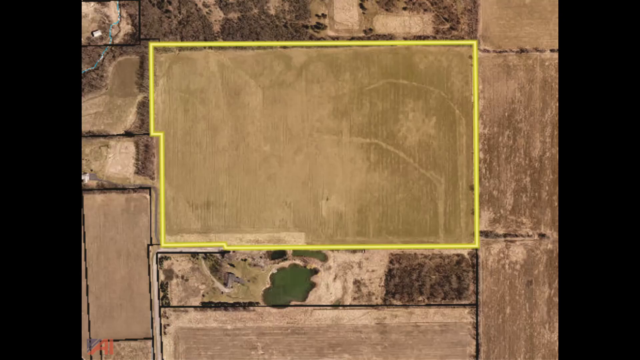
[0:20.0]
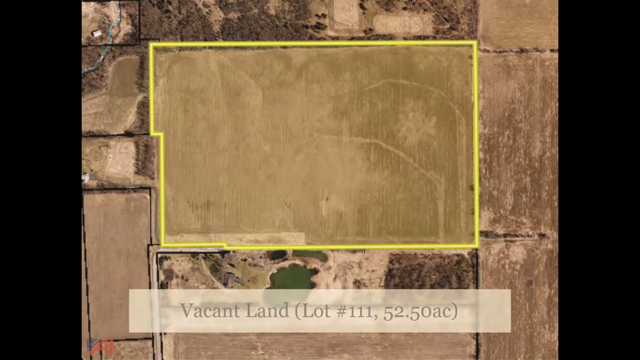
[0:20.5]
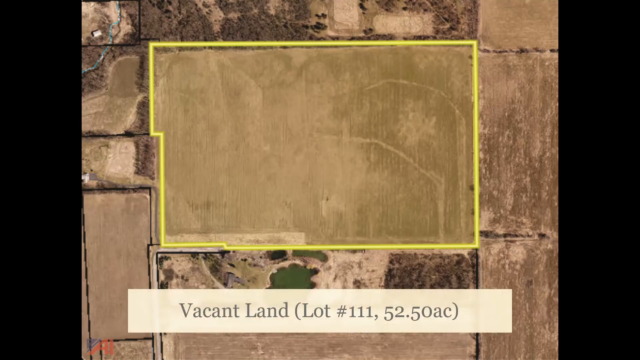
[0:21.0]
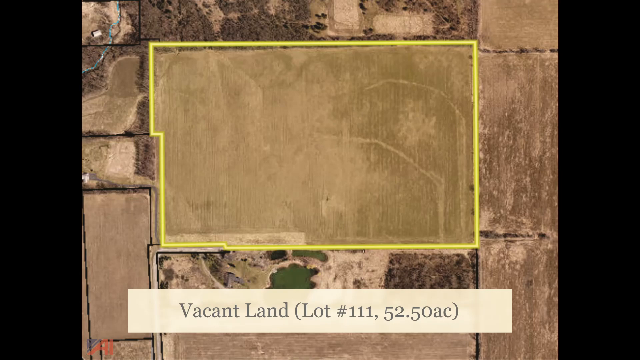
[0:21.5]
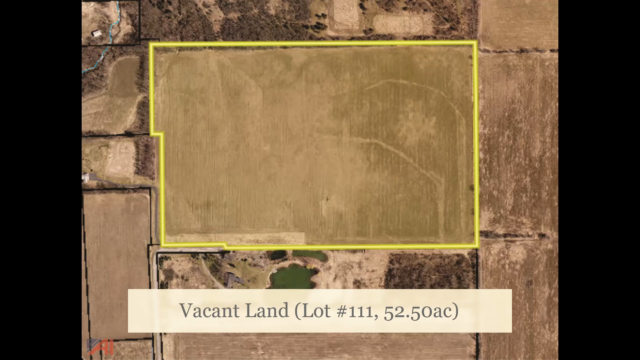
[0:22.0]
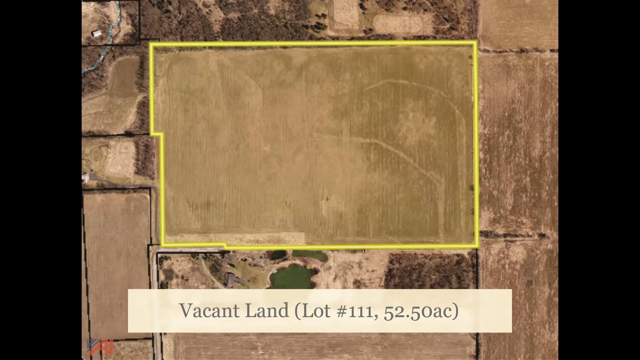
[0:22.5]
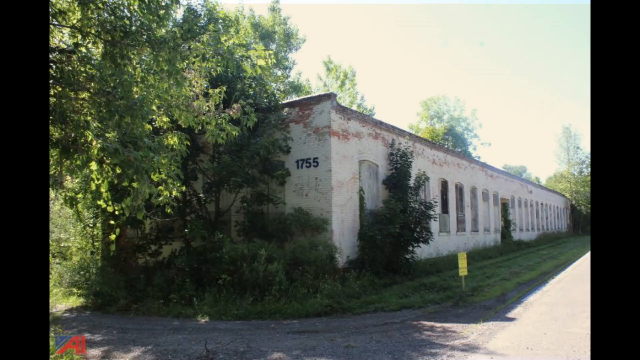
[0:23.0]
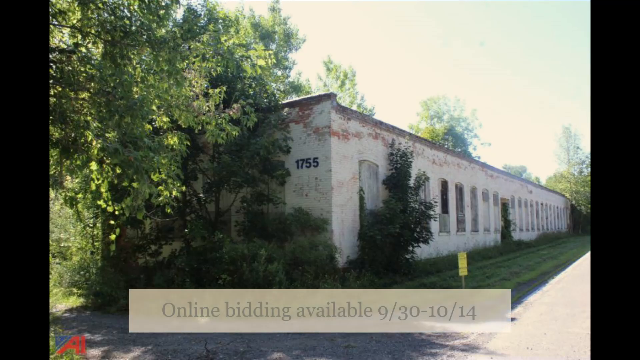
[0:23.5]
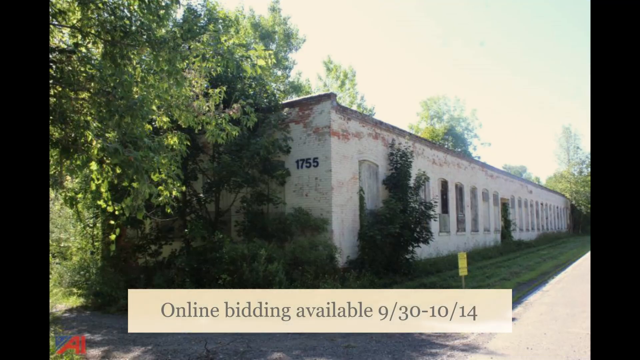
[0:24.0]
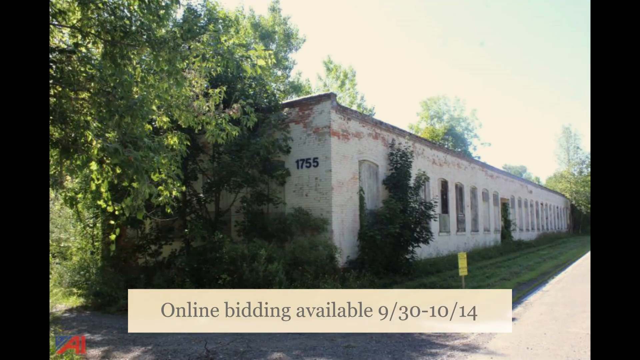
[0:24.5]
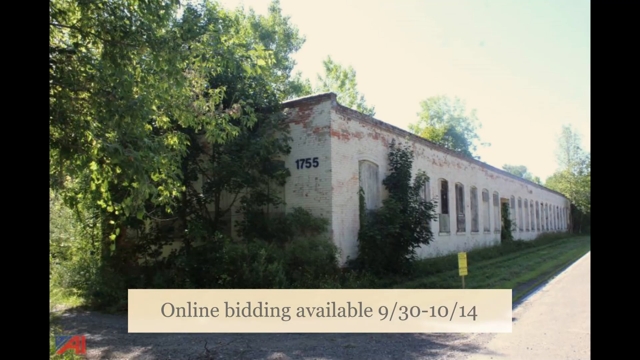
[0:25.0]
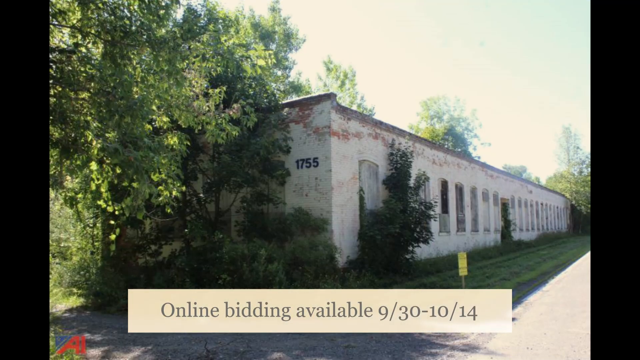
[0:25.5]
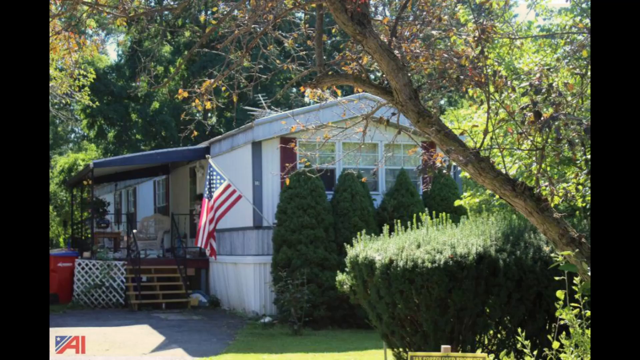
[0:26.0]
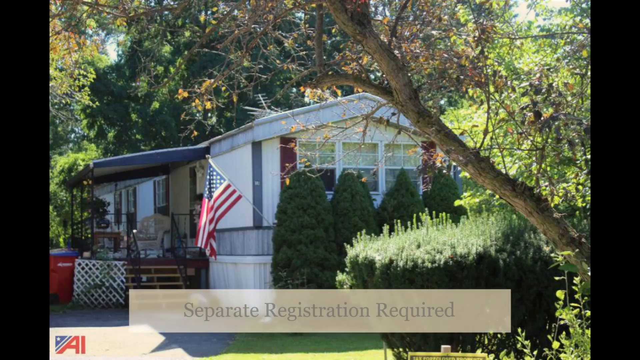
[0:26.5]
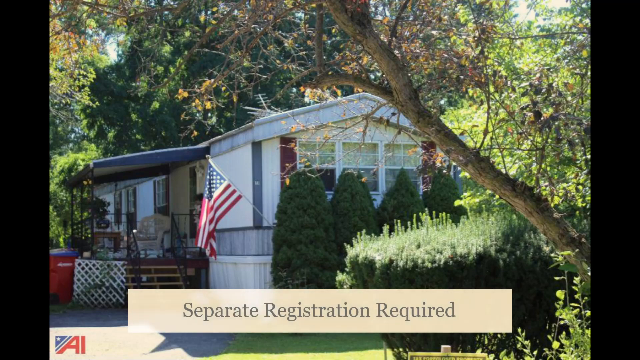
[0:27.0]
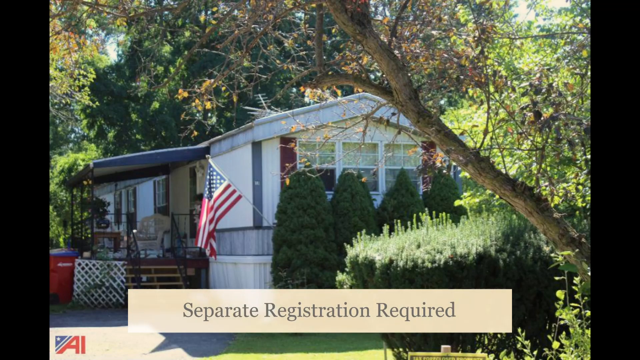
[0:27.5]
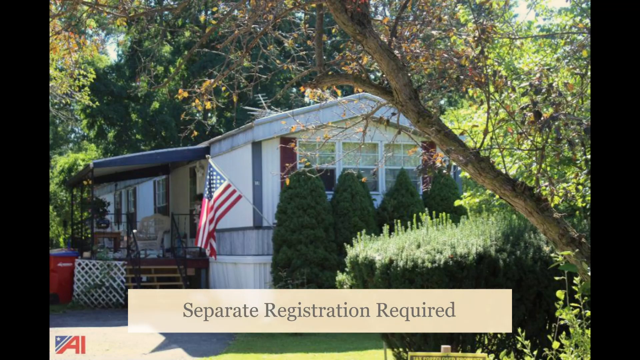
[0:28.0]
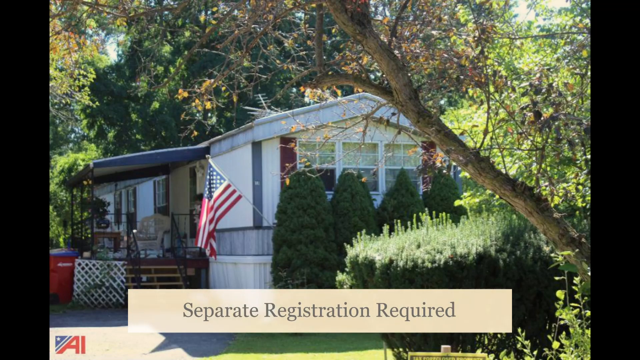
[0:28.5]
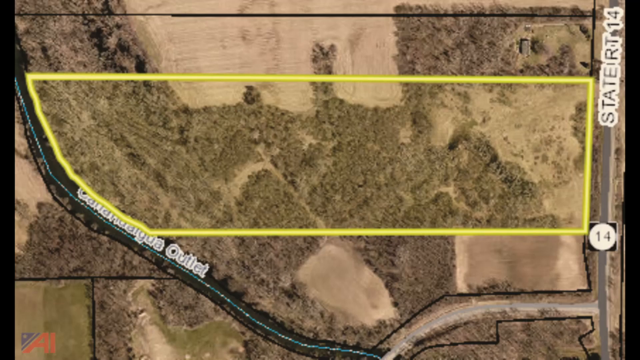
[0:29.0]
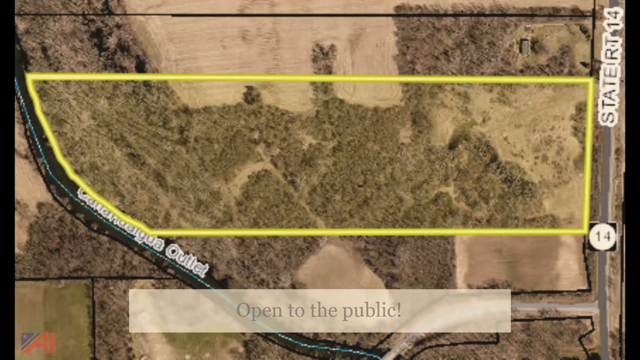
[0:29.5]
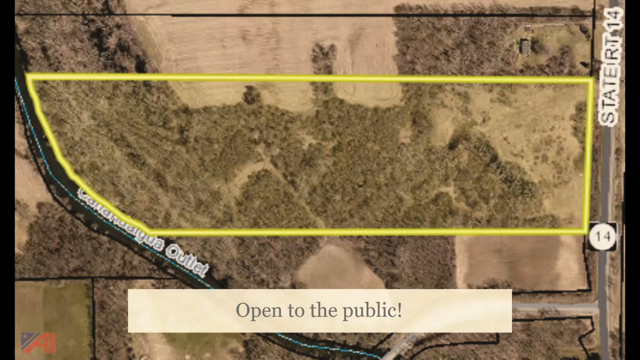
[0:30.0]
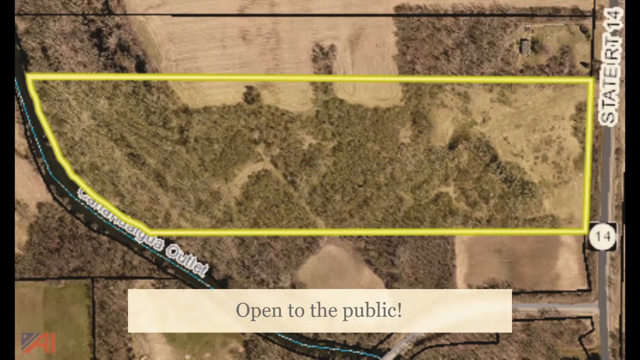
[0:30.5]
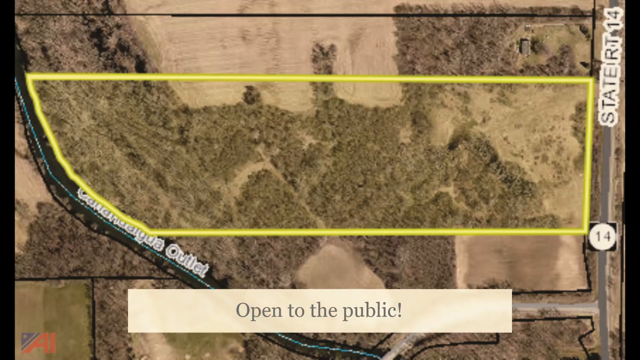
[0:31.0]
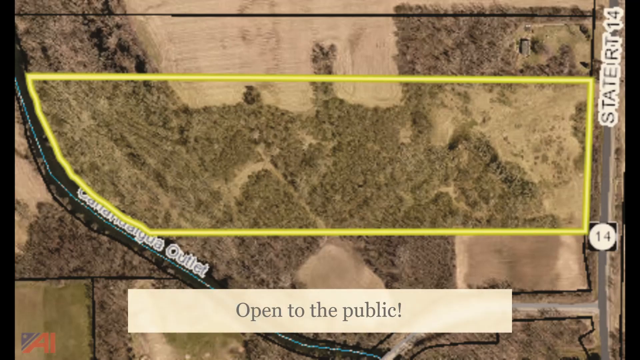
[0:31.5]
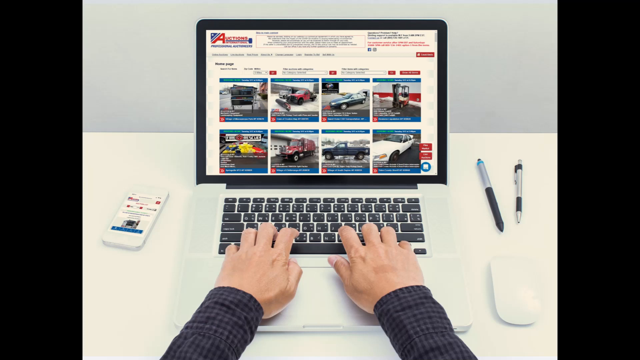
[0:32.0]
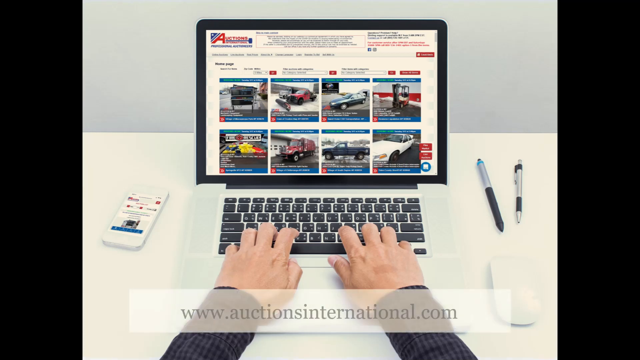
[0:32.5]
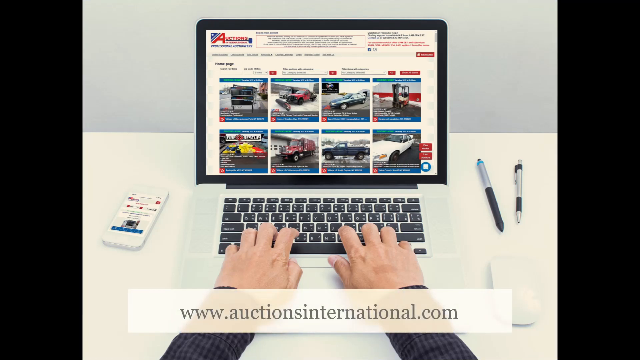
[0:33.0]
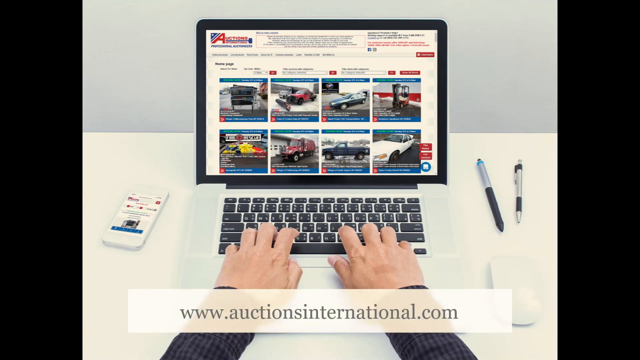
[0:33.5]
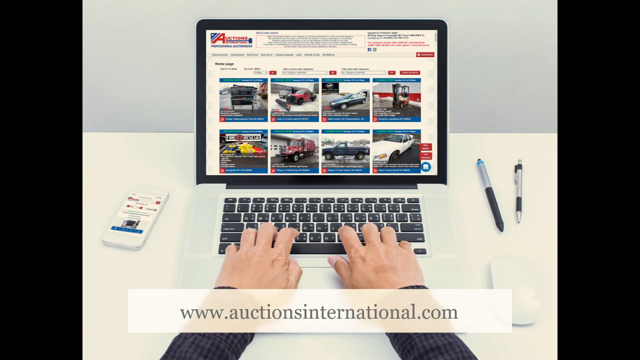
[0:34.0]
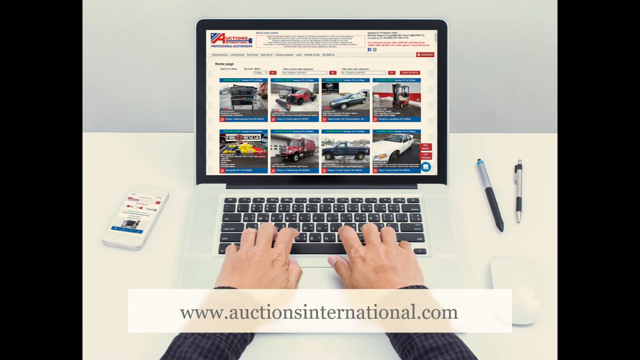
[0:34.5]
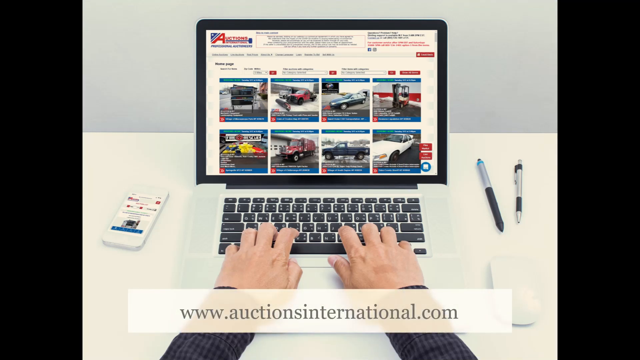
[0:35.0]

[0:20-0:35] Another parcel of land, seen from a satellite view looking down, is shaped like a rectangle and captioned "vacant land, lot number 111," 52.5 acres. The image changes to a ground-level photograph of a very long single-story building with lots of windows; it looks like it could be a motel or some type of factory. The caption says "online bidding available 9.30 through 10.14." Another home appears with a caption that says "separate registration required." It is a mobile home or a modular home, appearing to be a single or a double wide, with an American flag mounted on the front and lots of trees and vegetation around it. Another top-down view of a parcel of land for sale is highlighted with a yellow line, with the caption "open to the public." The image then changes to a picture of a laptop with a website open showing many vehicles, perhaps an online auction. Two pale hands are positioned on the laptop's keyboard, a phone is sitting to the left, and two pens are sitting on the desk to the right.